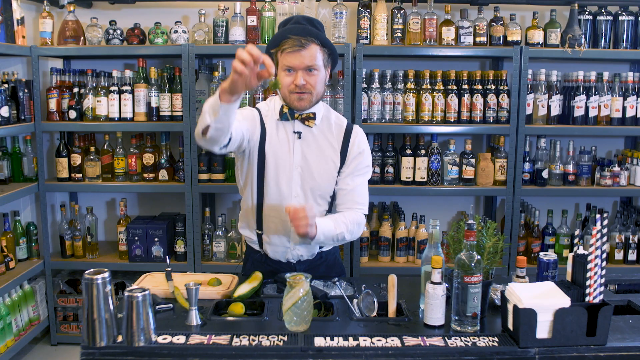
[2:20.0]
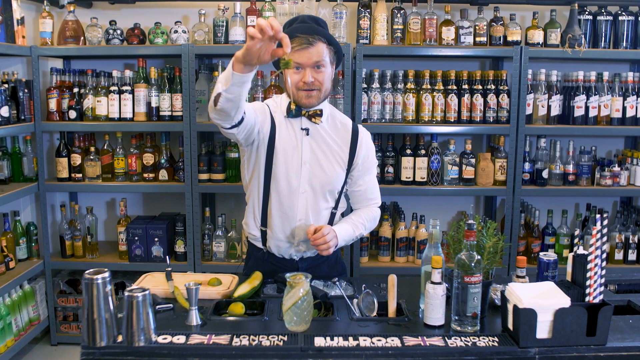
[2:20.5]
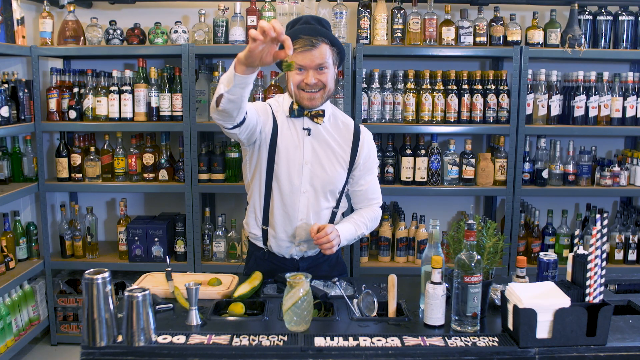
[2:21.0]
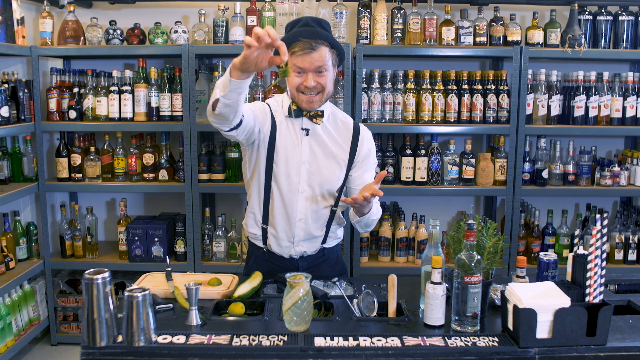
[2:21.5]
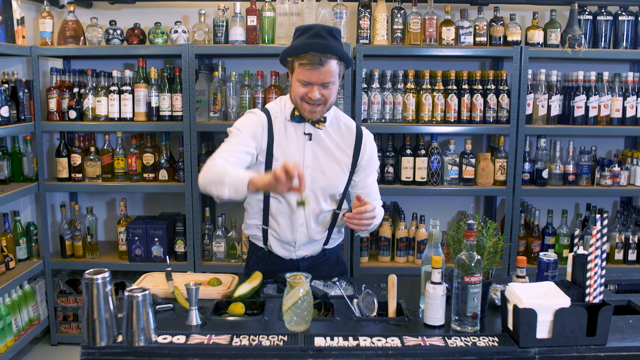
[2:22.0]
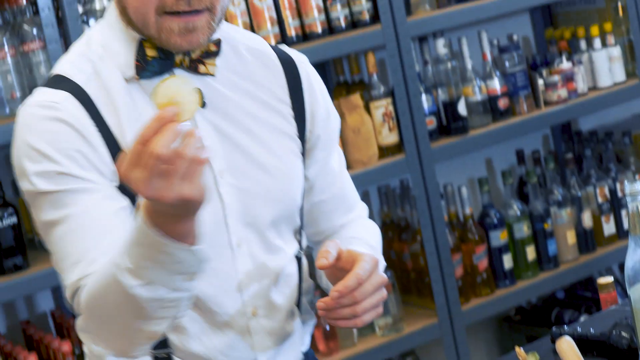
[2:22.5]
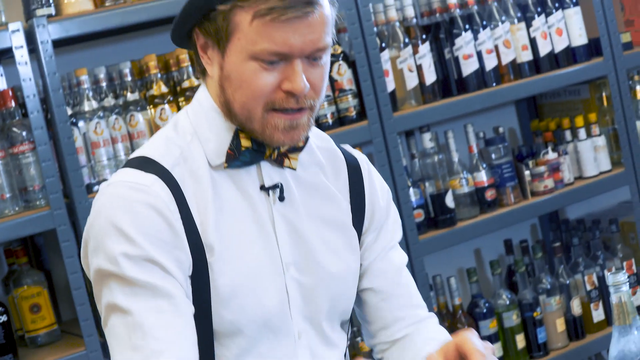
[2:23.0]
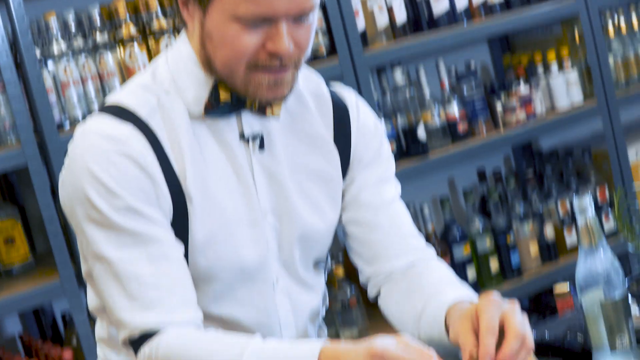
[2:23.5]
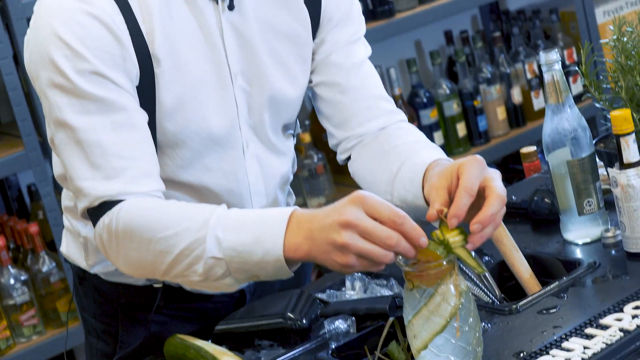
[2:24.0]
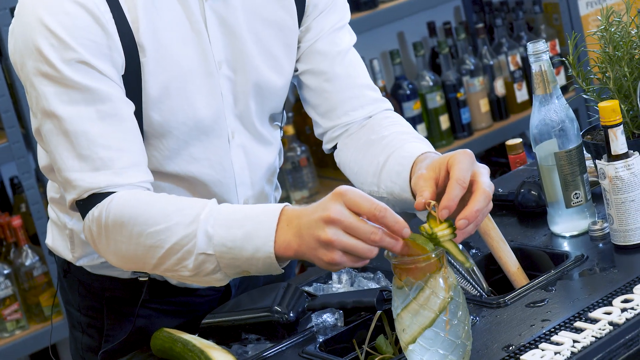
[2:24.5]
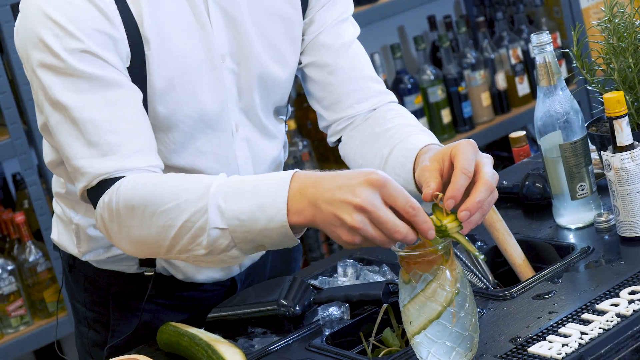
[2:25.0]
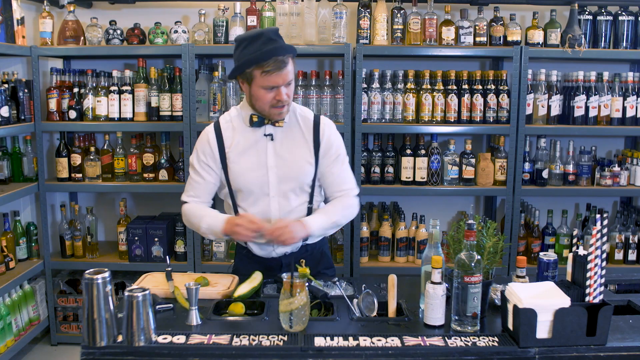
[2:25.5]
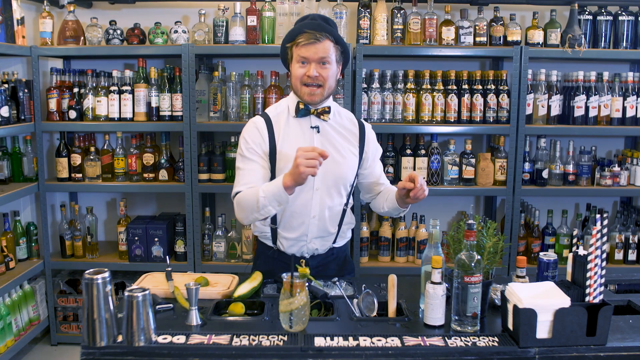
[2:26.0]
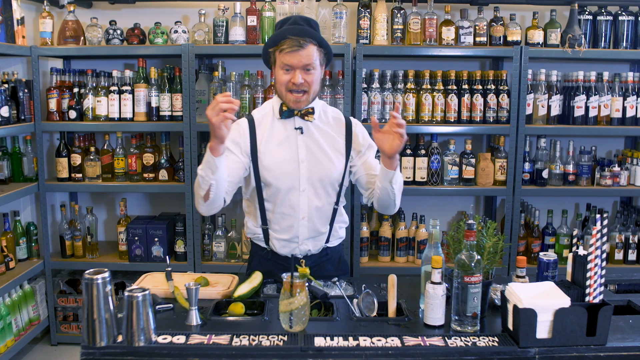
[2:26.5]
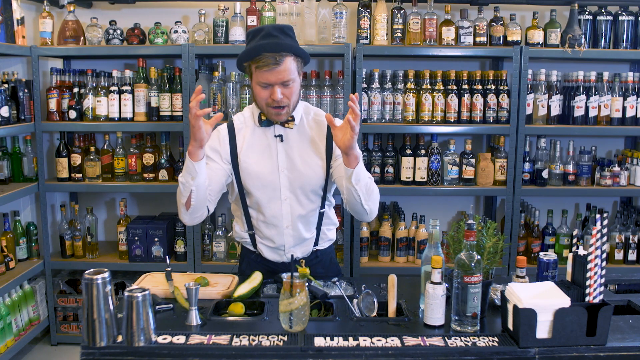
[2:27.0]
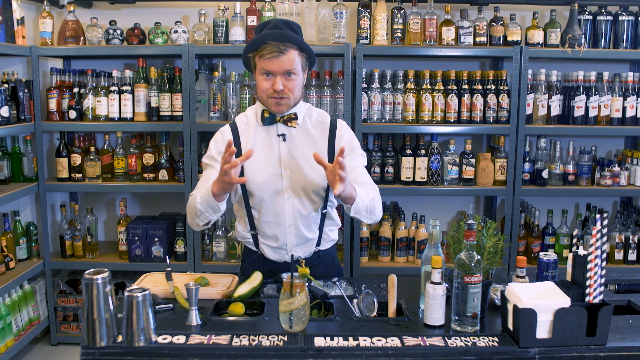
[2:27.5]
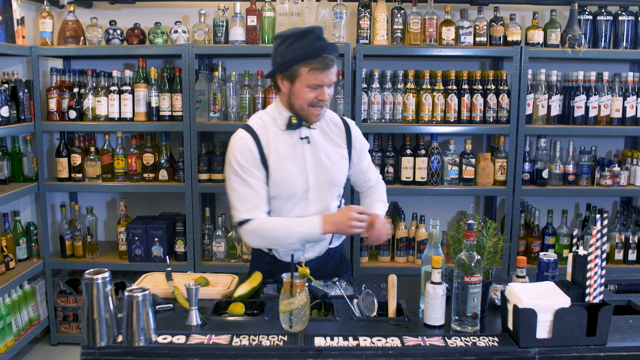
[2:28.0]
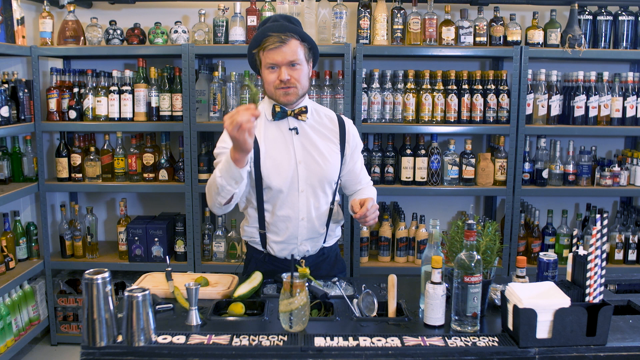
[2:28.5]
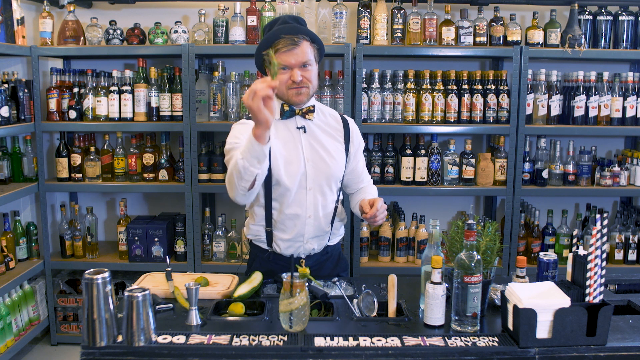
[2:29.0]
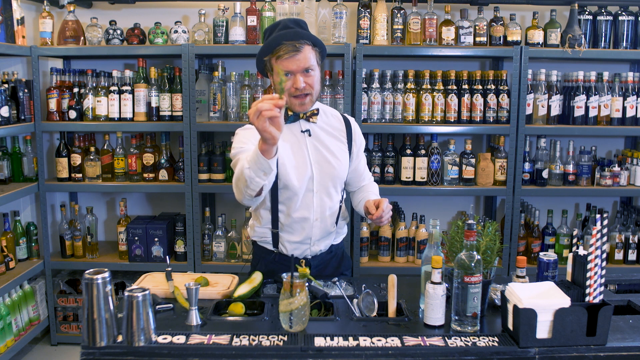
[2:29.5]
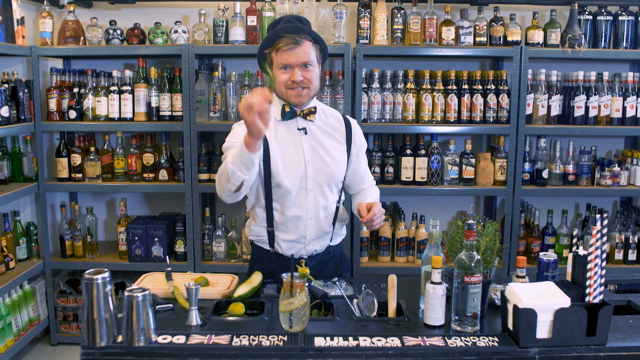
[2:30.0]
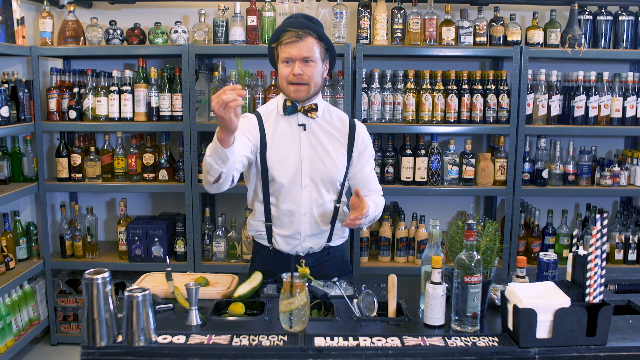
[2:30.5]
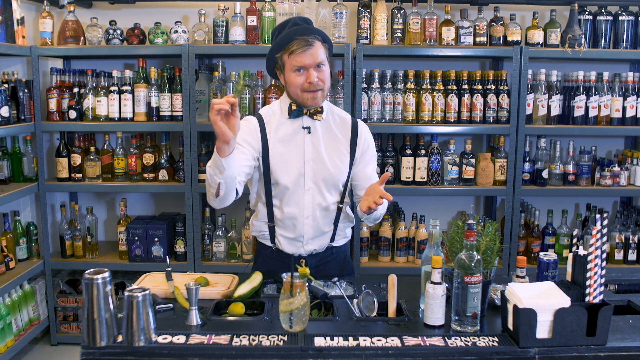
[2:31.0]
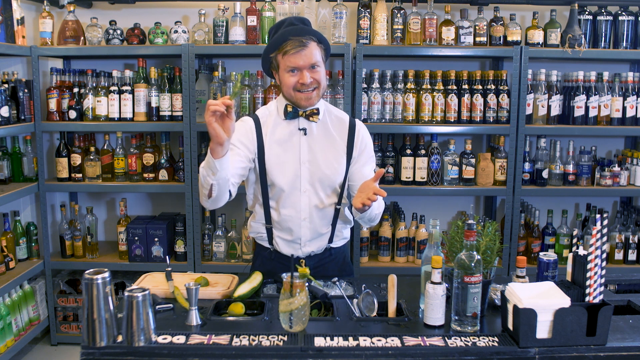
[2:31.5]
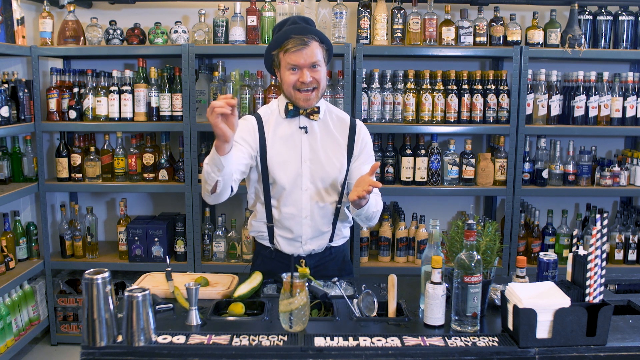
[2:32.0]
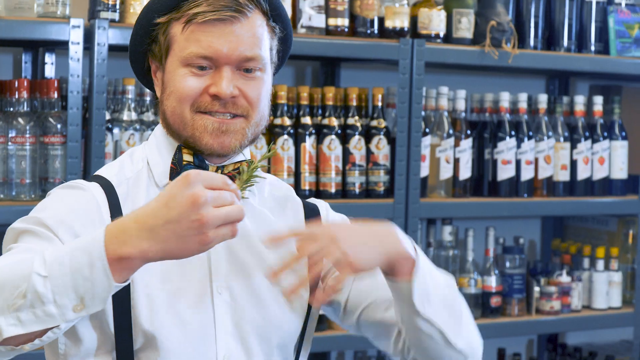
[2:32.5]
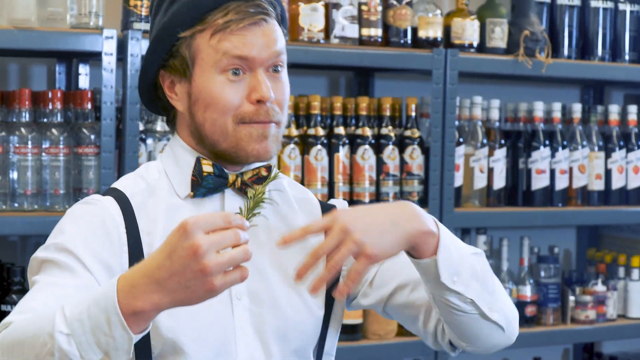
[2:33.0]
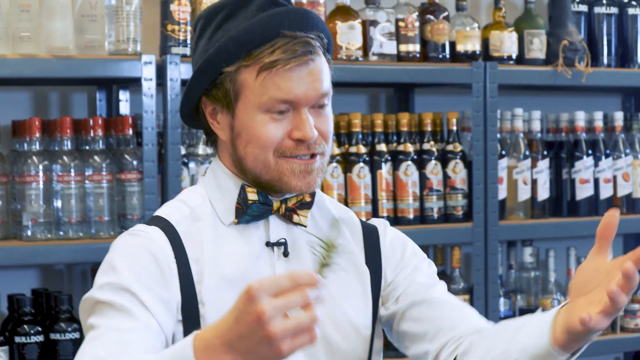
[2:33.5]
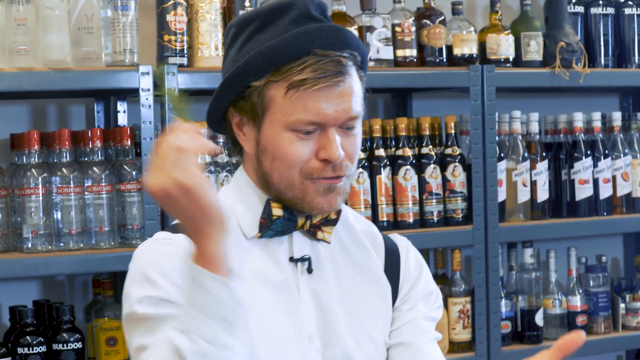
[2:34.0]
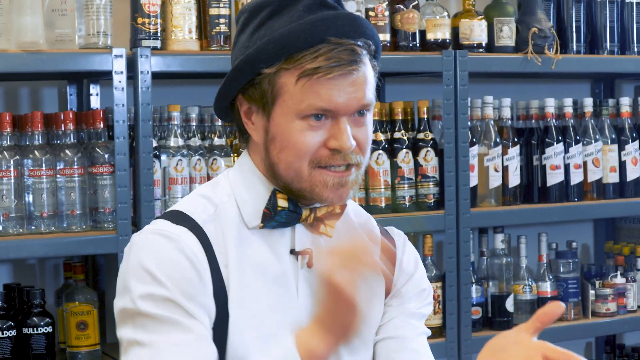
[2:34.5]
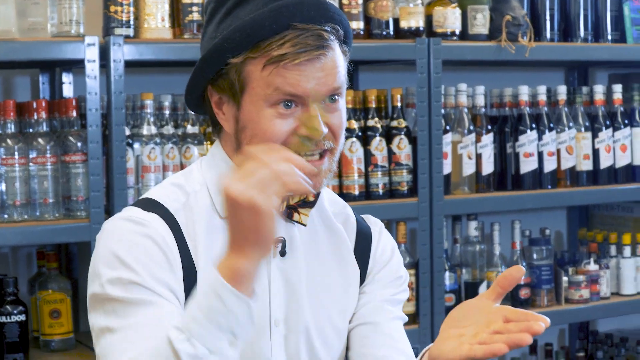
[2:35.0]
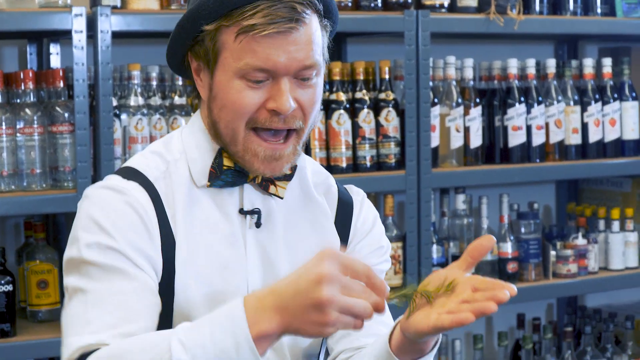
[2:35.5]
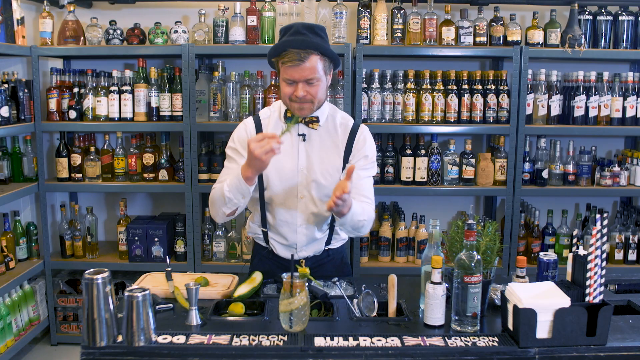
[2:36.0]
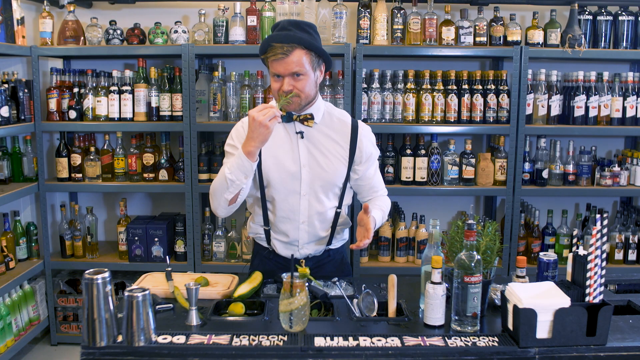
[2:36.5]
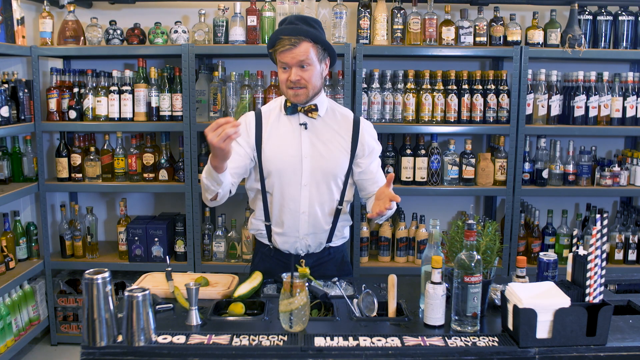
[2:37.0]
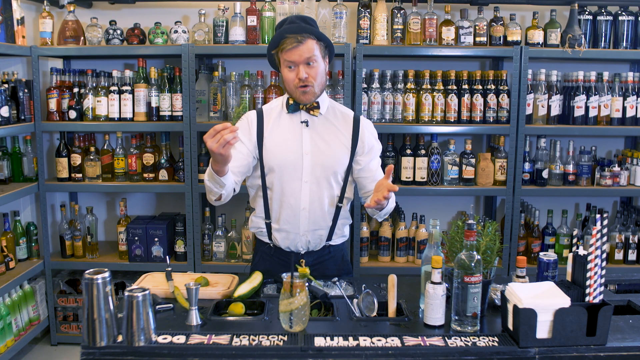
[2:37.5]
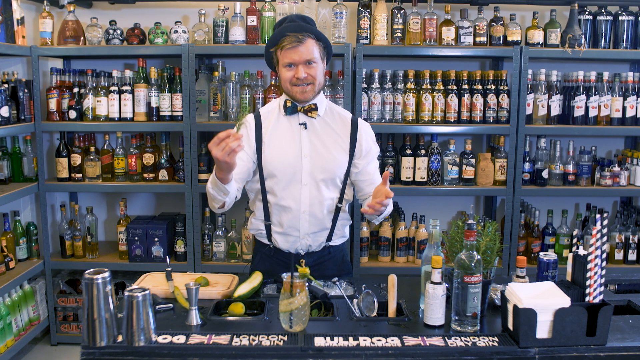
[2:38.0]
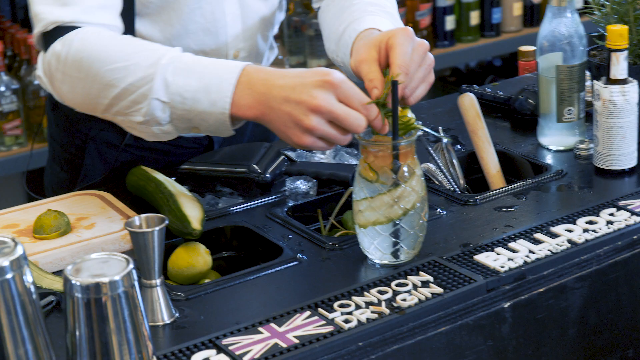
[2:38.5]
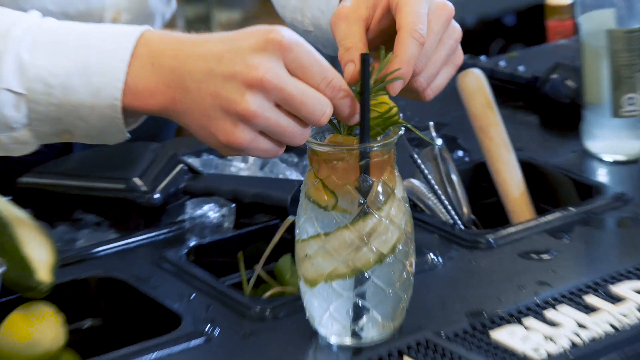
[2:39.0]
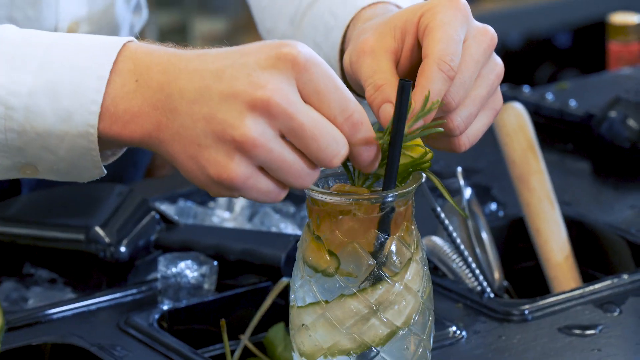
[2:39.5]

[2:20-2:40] Holding up the wrapped cucumber pierced with the stick in one hand, Rasmus drops it into the pineapple-shaped glass cup, placing it on top at the edge of the cup. He gesticulates with his hand, grabs a piece of the rosemary plant and shakes it in one hand while moving the other. He taps the rosemary on the palm of his other hand multiple times, smells it by holding it close to his nose, and places it inside the cup. The cup is on the black table, where the various ingredients used for the Moscow Mule are: the vodka, the Angostura Bitter and the Ginger Beer. The remaining lime is face down on the chopping board, with a black-handled knife also on the board.